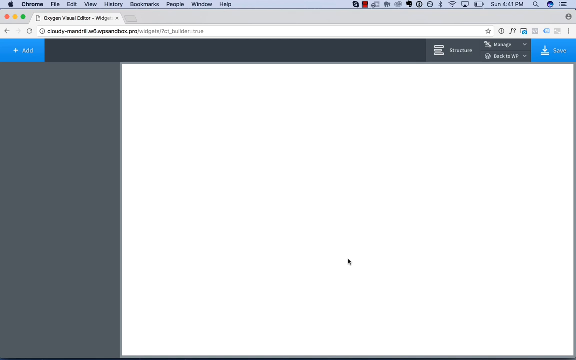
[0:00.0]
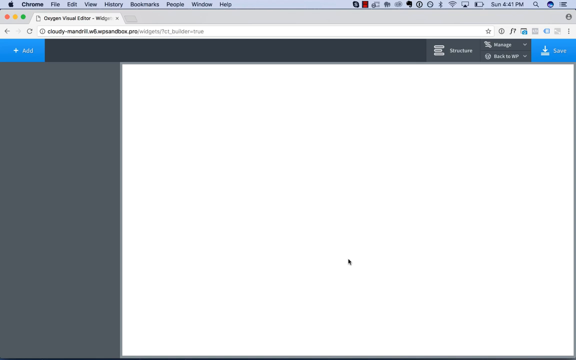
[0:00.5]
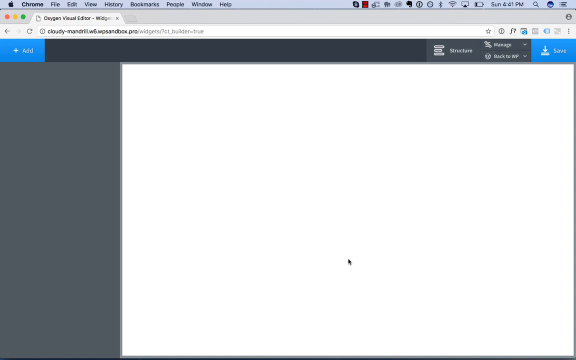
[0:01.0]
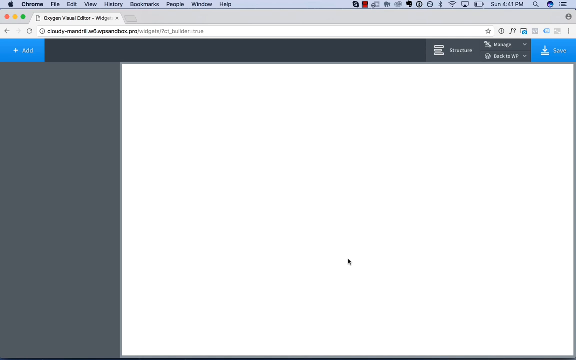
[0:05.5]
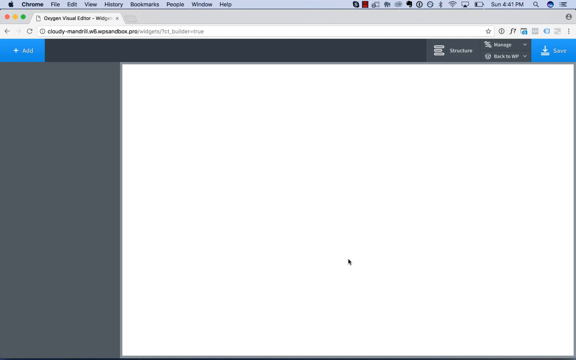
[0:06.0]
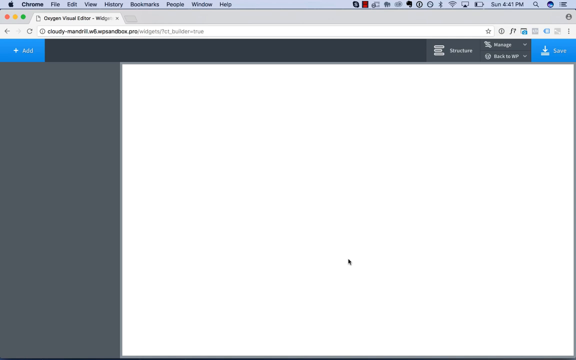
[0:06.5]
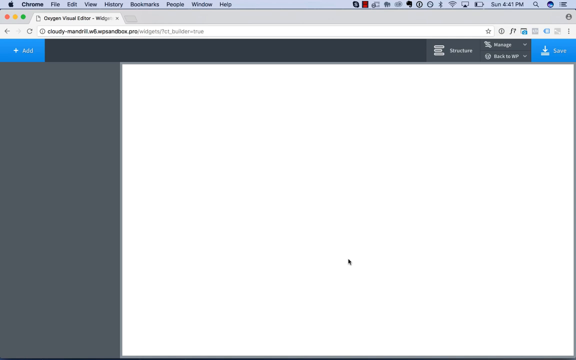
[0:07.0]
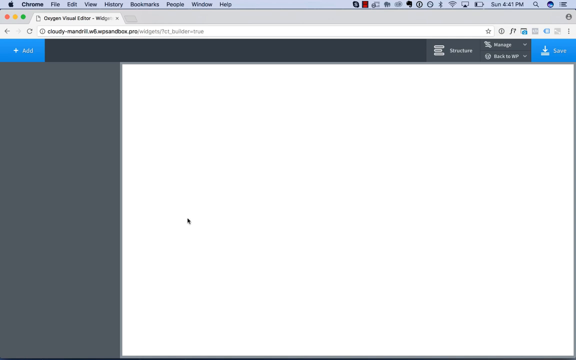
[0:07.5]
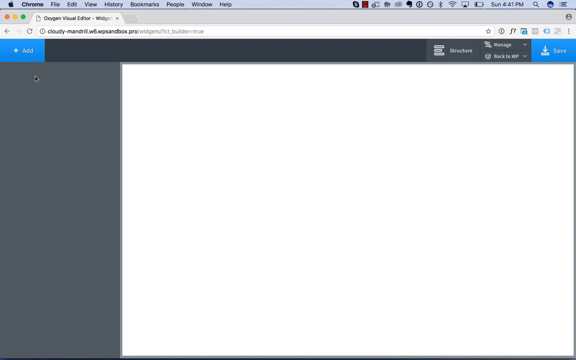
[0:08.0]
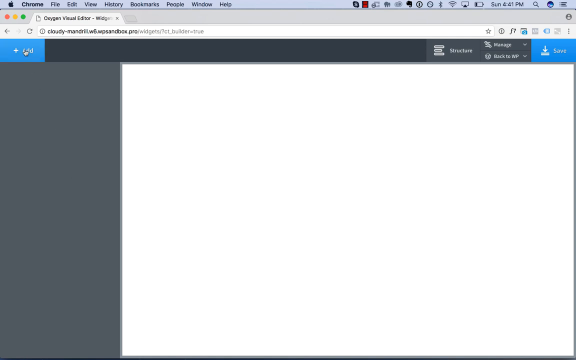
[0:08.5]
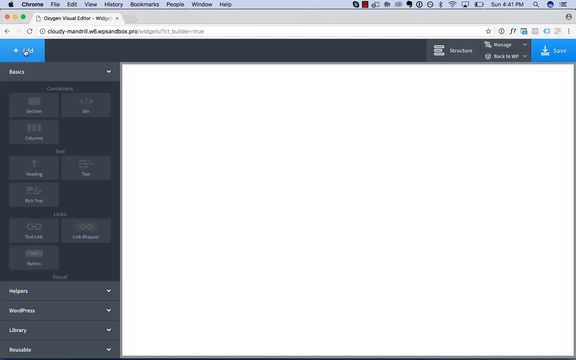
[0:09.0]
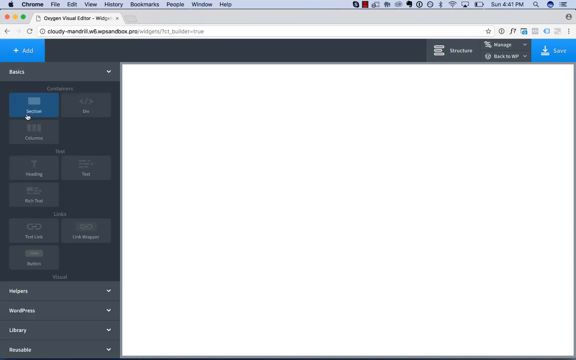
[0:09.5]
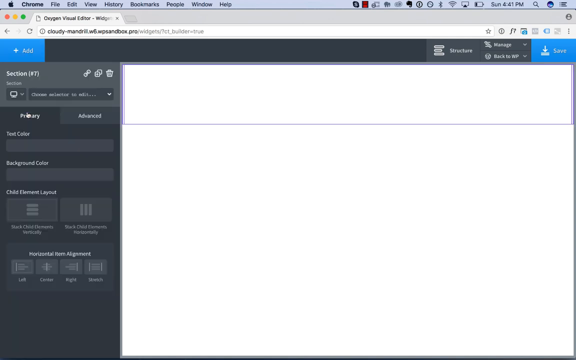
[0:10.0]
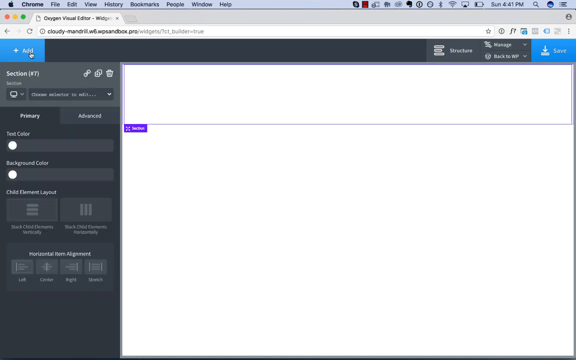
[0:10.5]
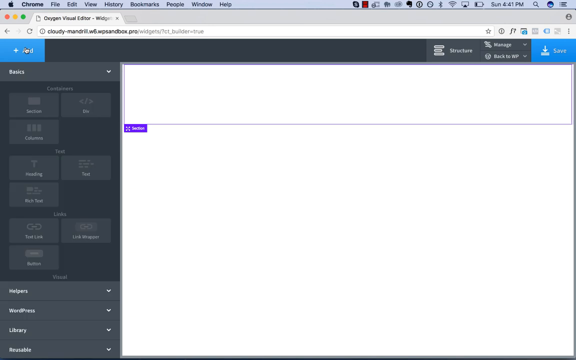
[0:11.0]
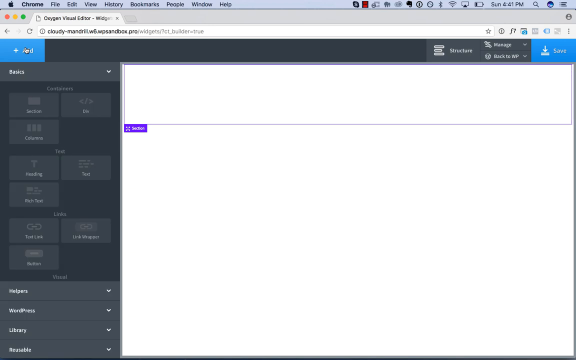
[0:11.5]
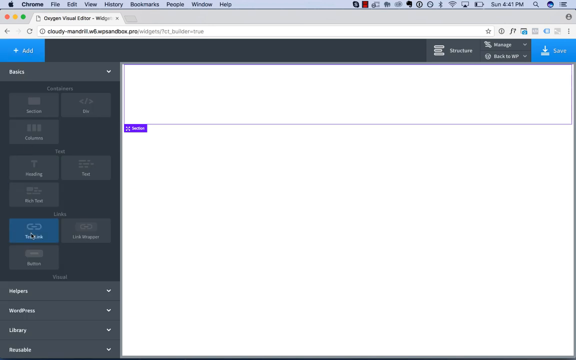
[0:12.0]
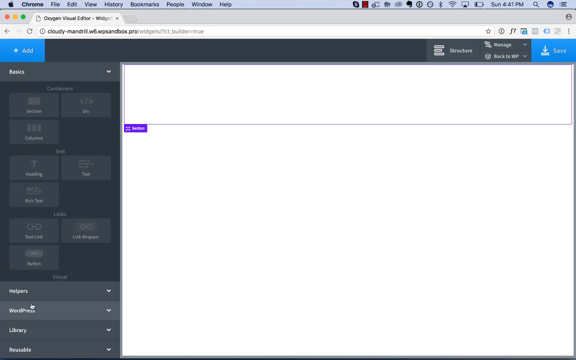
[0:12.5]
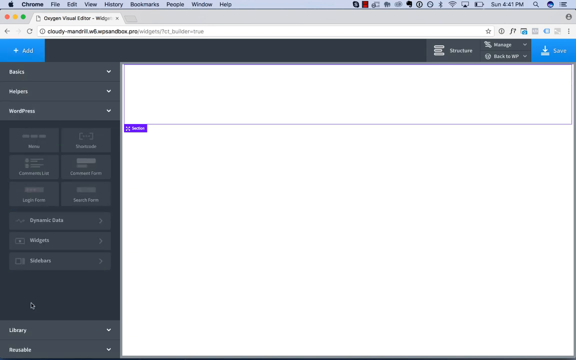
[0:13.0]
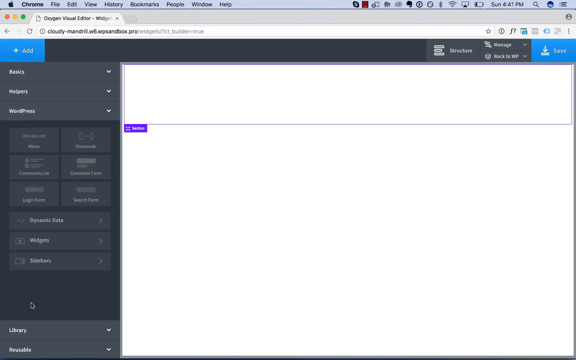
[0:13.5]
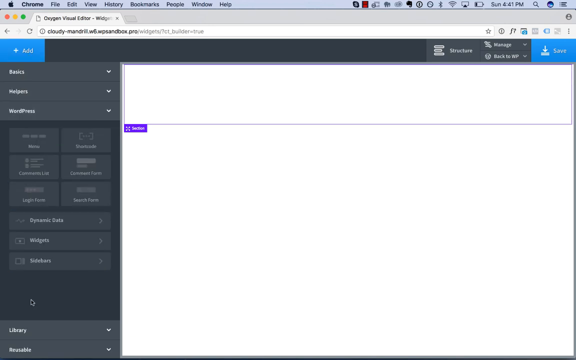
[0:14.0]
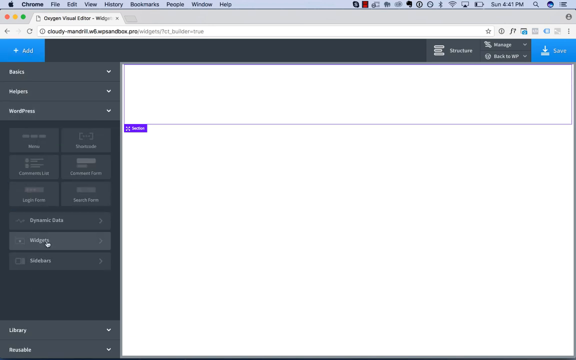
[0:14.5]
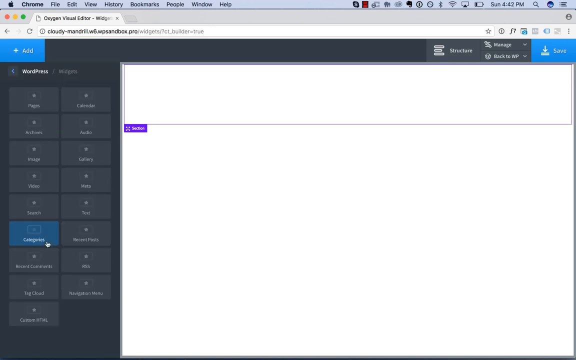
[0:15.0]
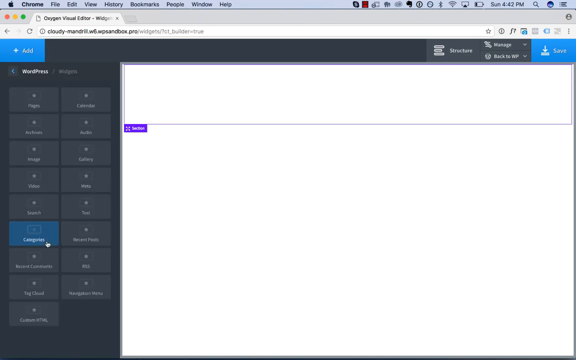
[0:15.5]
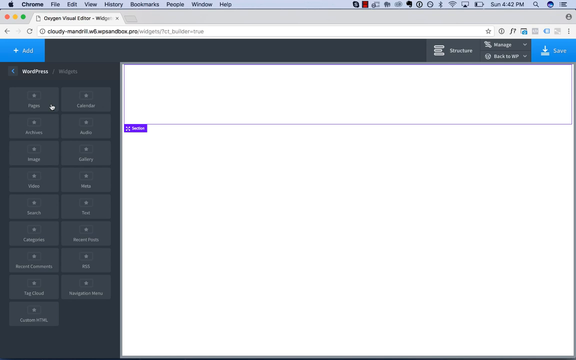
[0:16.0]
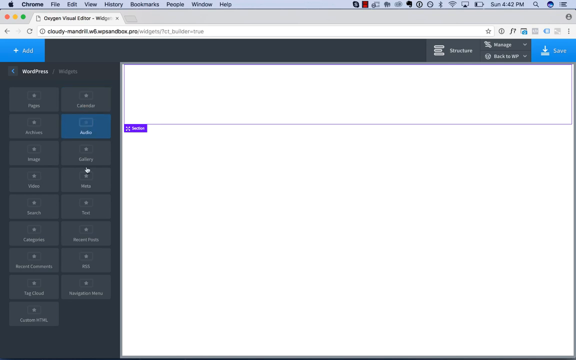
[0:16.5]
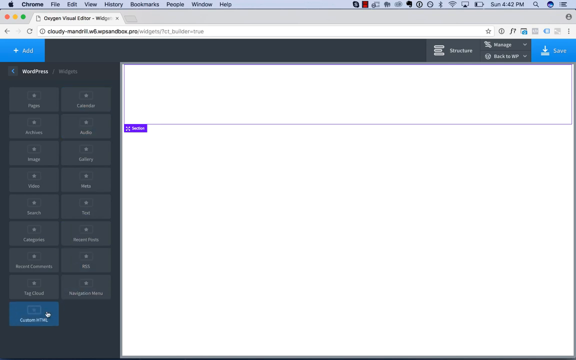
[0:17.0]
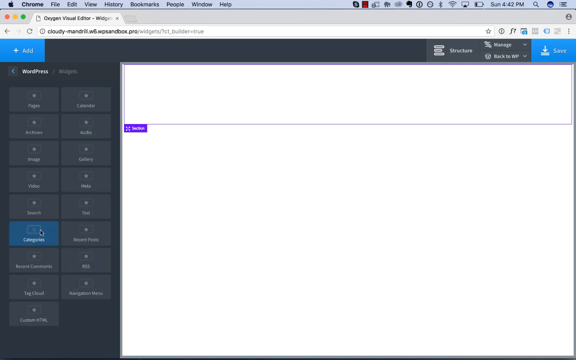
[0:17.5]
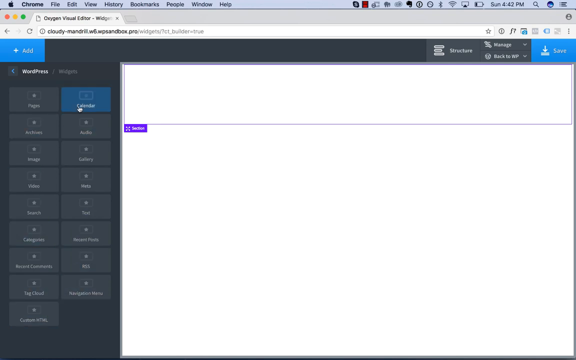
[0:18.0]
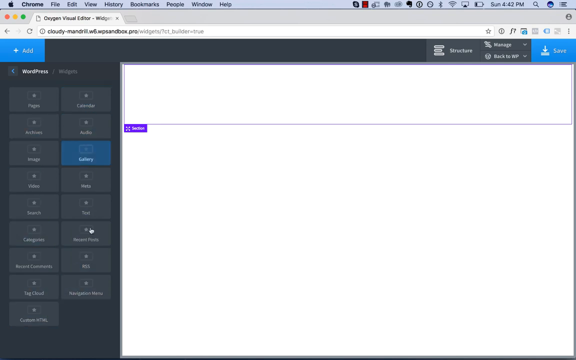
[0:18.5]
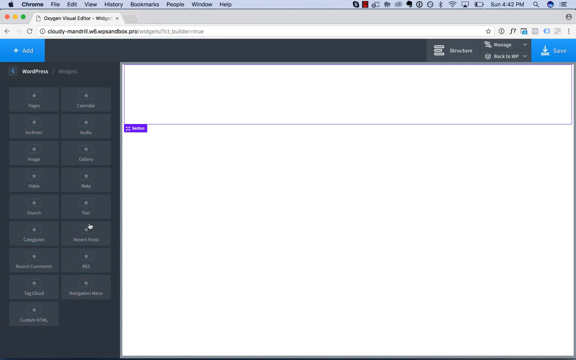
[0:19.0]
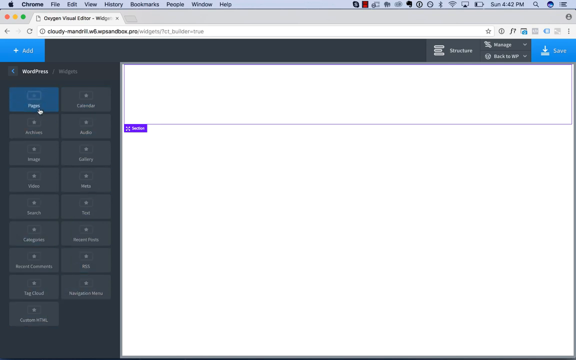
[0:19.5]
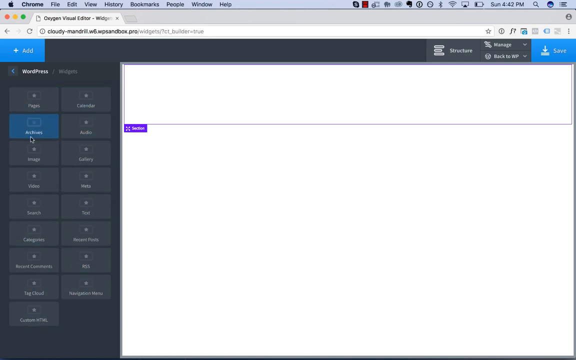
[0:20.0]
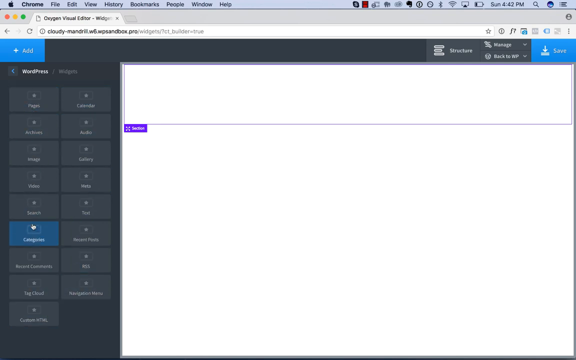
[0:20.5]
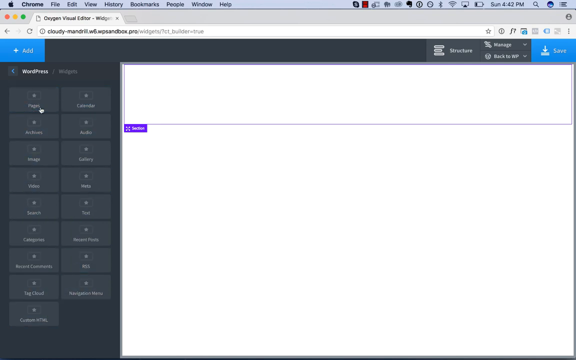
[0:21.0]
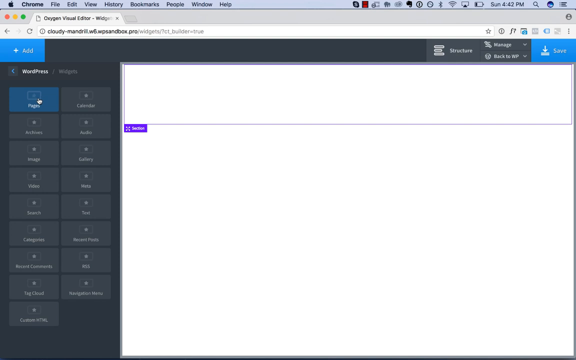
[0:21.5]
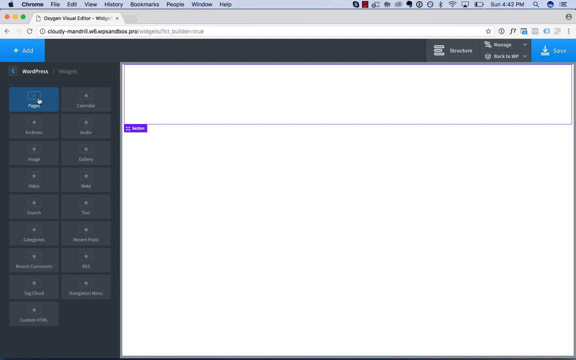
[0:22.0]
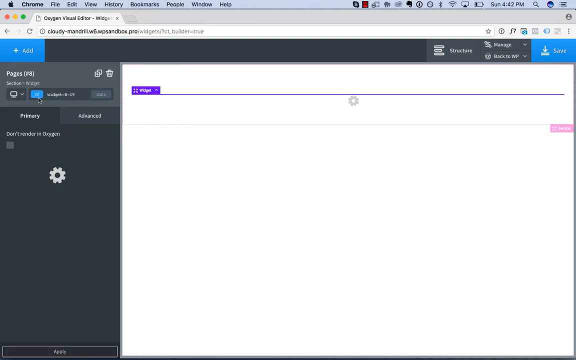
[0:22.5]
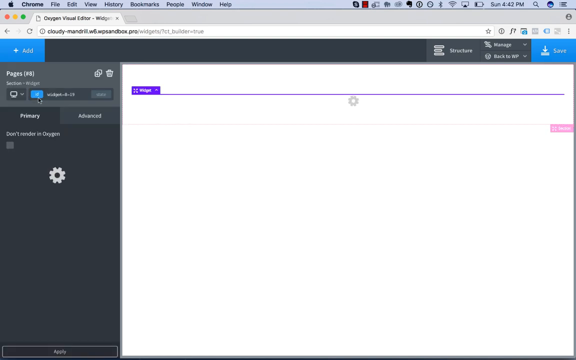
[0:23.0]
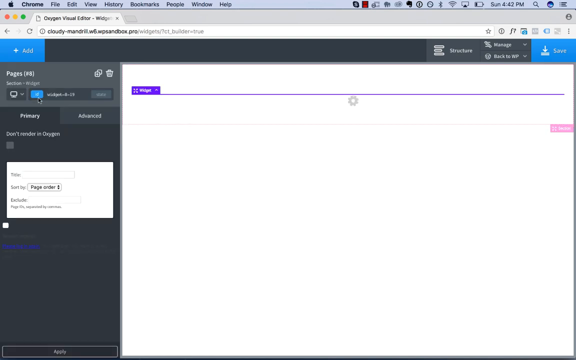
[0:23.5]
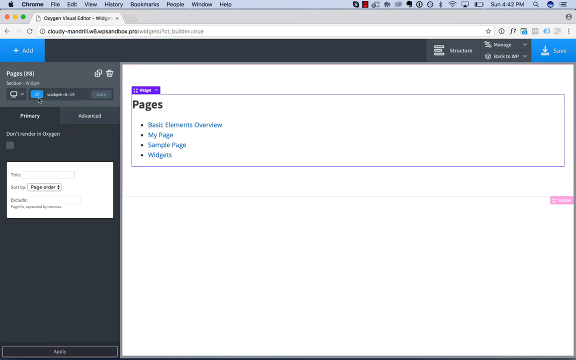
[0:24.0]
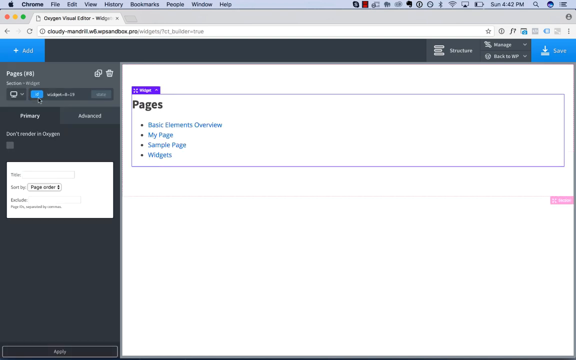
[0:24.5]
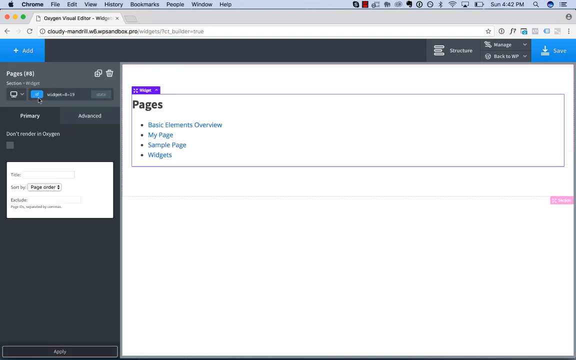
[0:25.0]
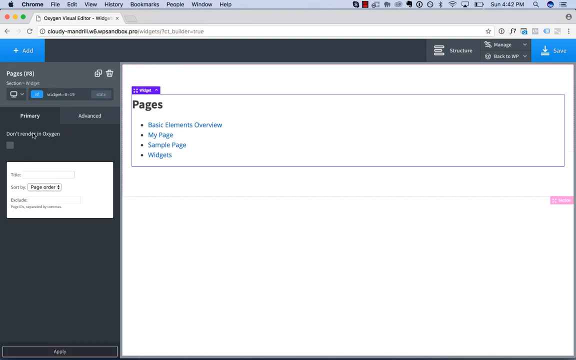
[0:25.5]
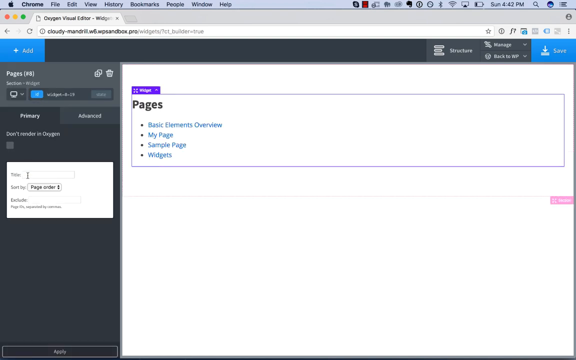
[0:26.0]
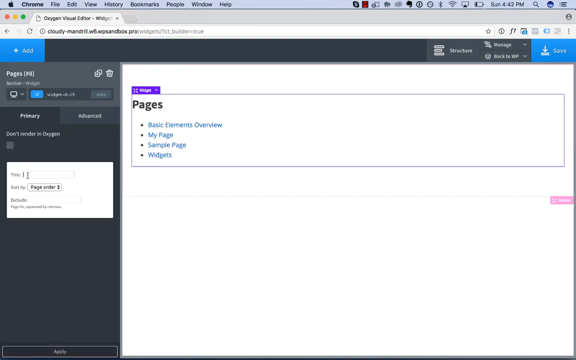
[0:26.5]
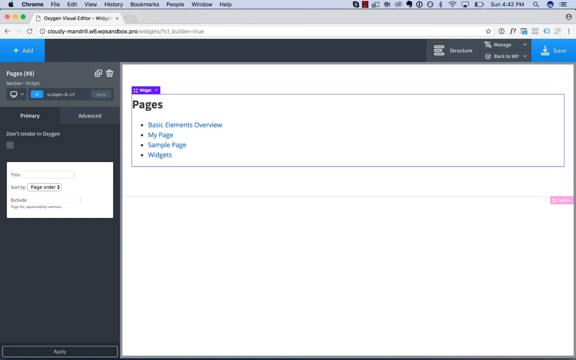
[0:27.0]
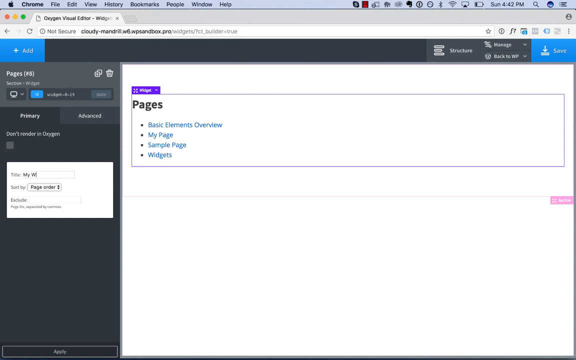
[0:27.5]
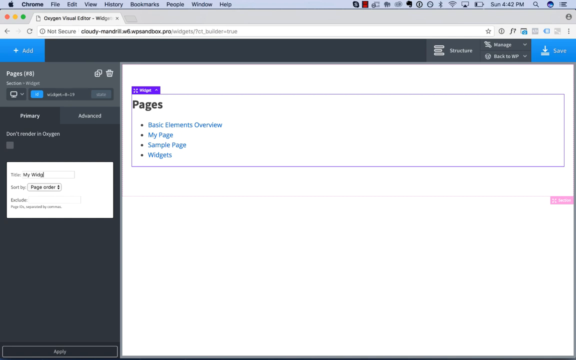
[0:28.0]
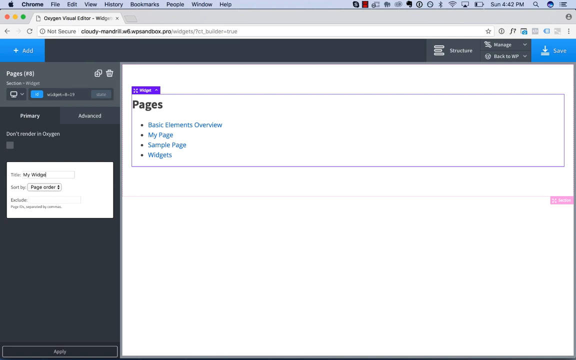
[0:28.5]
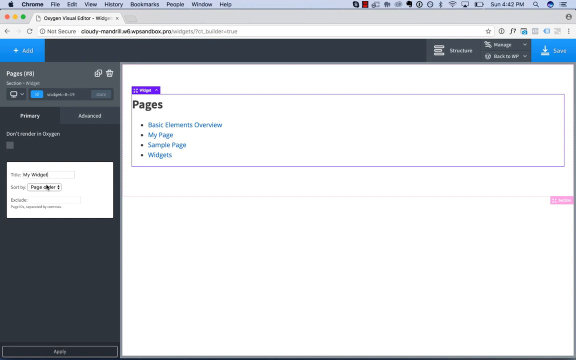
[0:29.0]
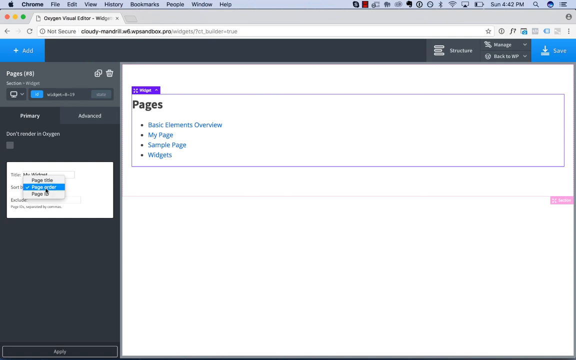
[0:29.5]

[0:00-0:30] A user has Oxygen Visual Editor open in the Chrome browser on a Mac, with the cursor in the middle of the screen. They click Add in the top area of the screen and go to add a WordPress widget. All the page content pops up on the screen, and they start typing the title My Widget, then hit page view. They are creating a page in Oxygen Visual Editor and naming it. The Mac menu bar at the top reads "Chrome, File, Edit, Windows, History, Bookmarks, People, Windows, Help," along with other items on the bar, and the time shows 4:41 p.m. The blank Oxygen editor is open.